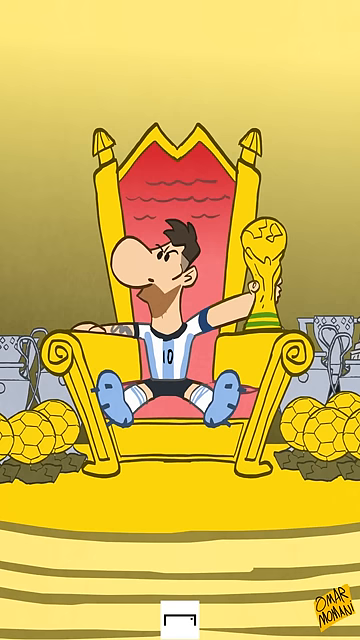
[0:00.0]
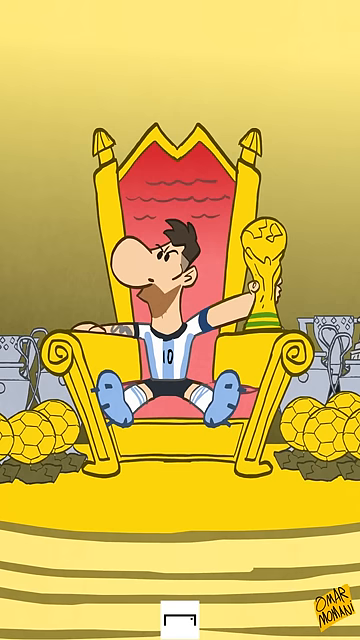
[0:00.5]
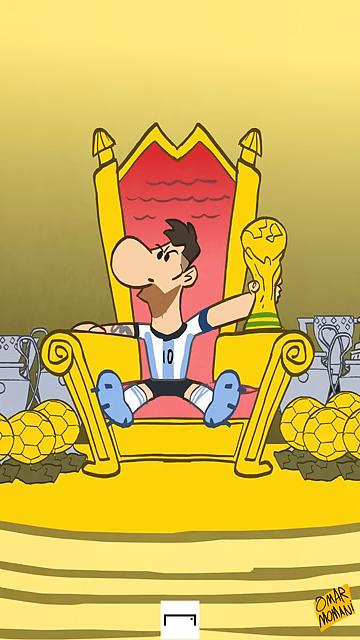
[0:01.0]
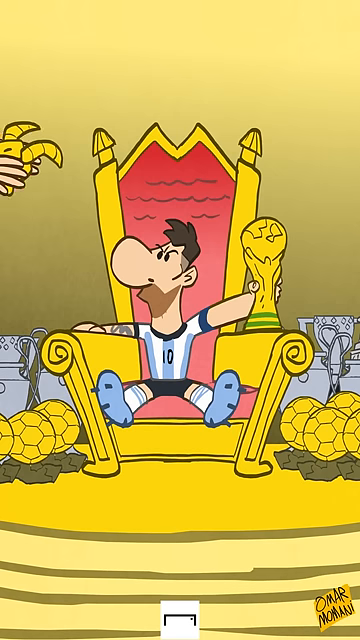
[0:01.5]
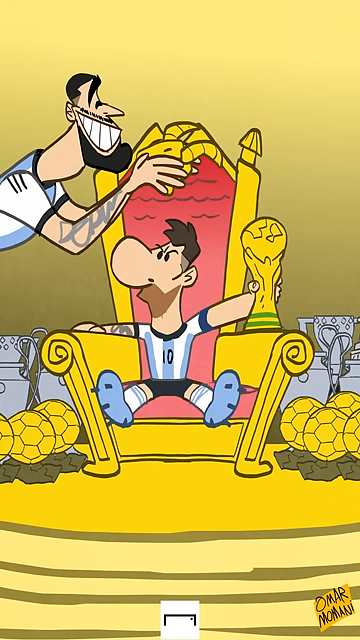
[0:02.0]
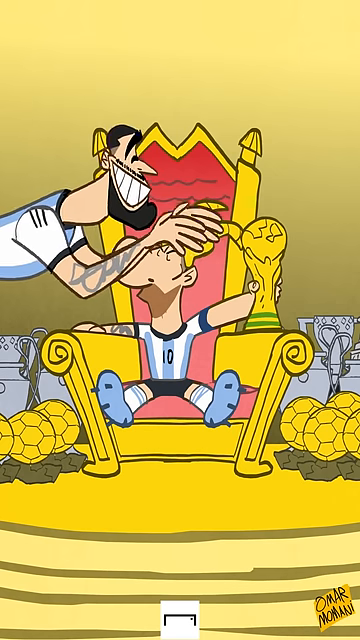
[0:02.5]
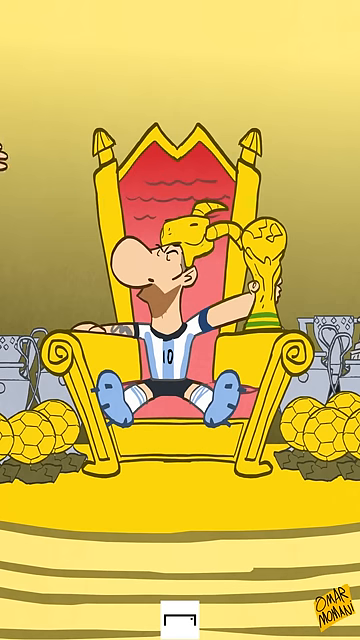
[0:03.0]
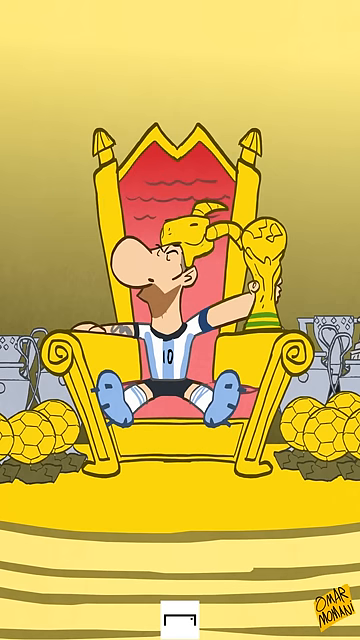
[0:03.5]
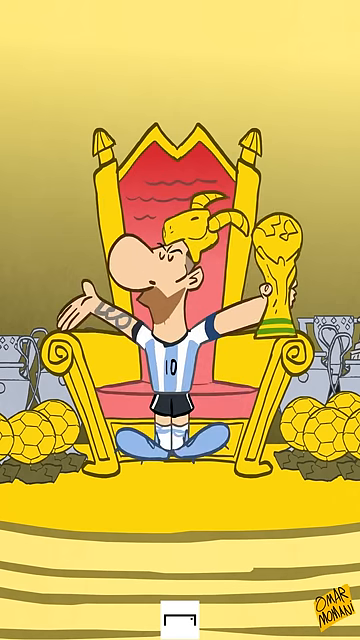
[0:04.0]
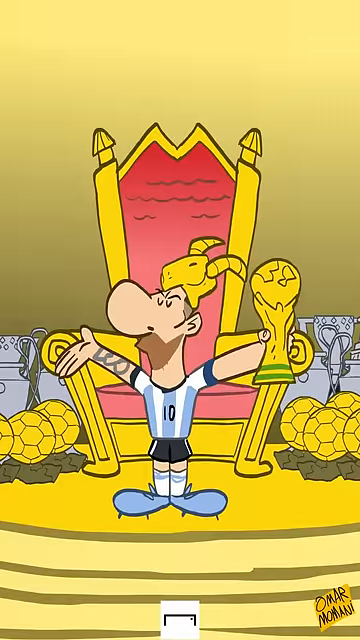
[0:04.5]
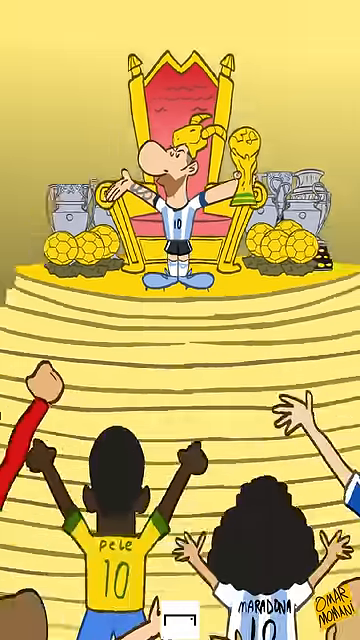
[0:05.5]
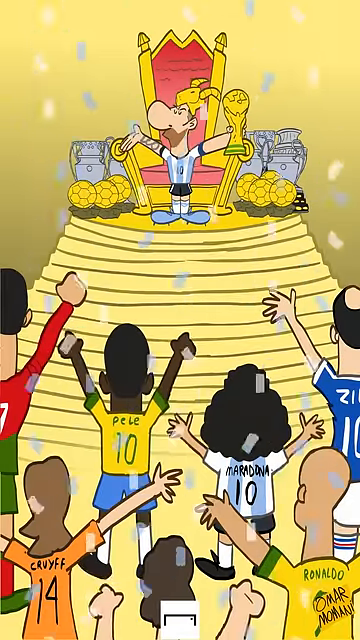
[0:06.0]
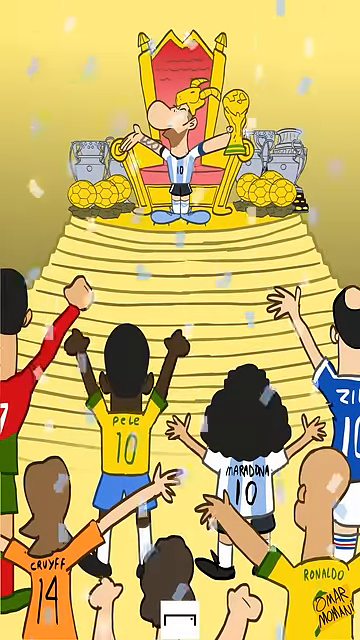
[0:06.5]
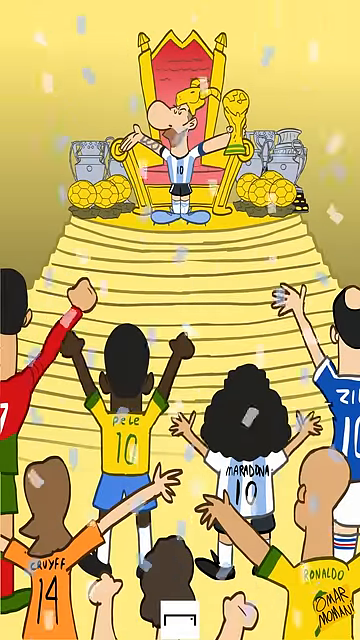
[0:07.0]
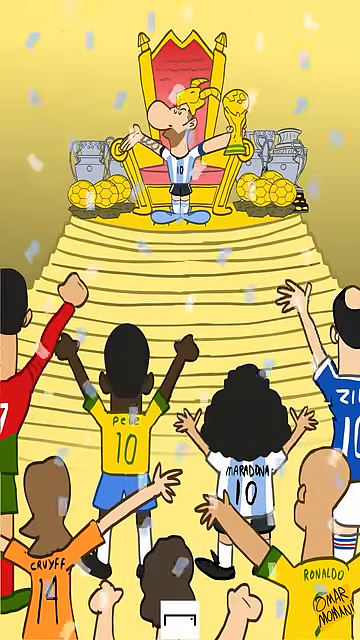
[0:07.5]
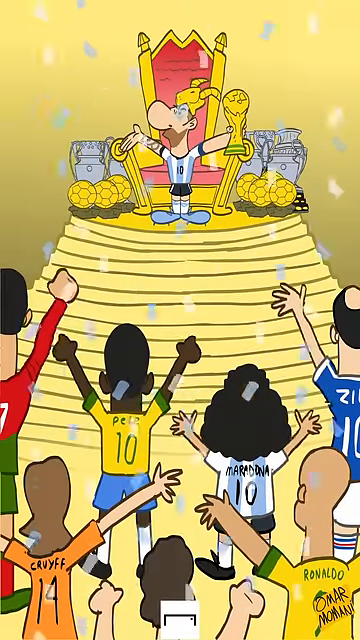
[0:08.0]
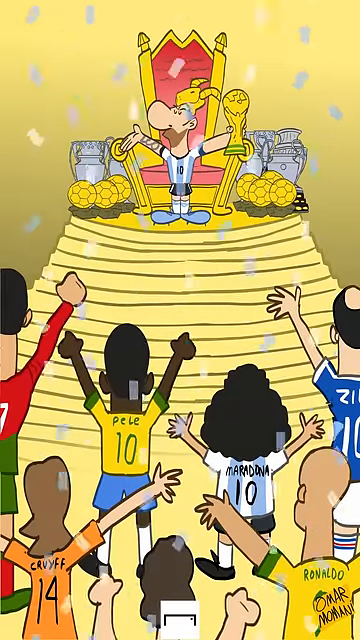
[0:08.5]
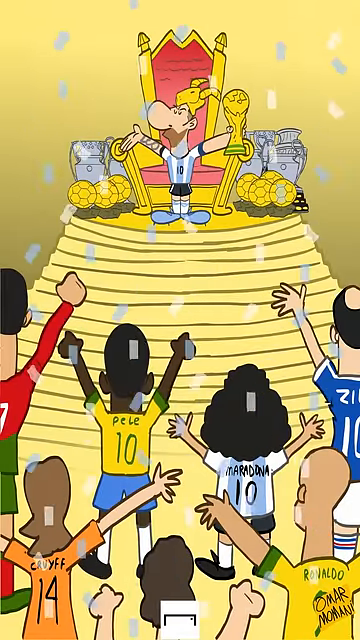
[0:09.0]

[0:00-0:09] A cartoon shows a man in a blue and white jersey, black shorts and blue shoes sitting in a red and gold throne. Around the throne there appear to be golden soccer trophies. The man, who has brown or black hair and a brown beard, holds a trophy in his left hand. Someone comes over from the side and places a crown on his head. He is up on what looks like a pedestal, and people down below are cheering for him; among them are people in a Merodena jersey, a Pele jersey and a Ronaldo jersey. The man who places the crown has a black beard and black hair and wears the same type of jersey as the number 10 man being crowned.